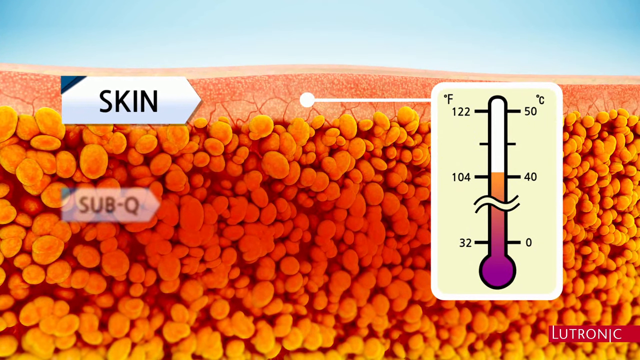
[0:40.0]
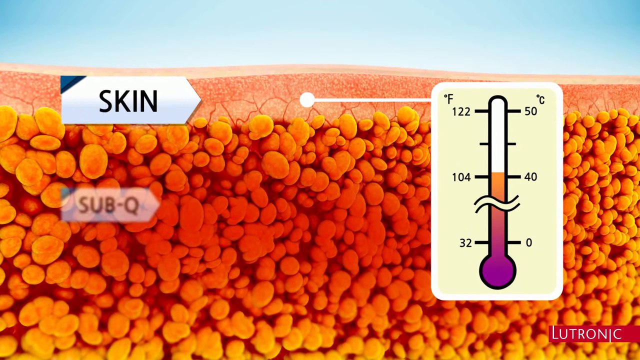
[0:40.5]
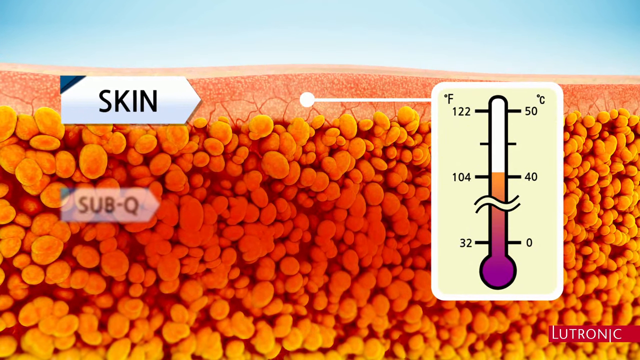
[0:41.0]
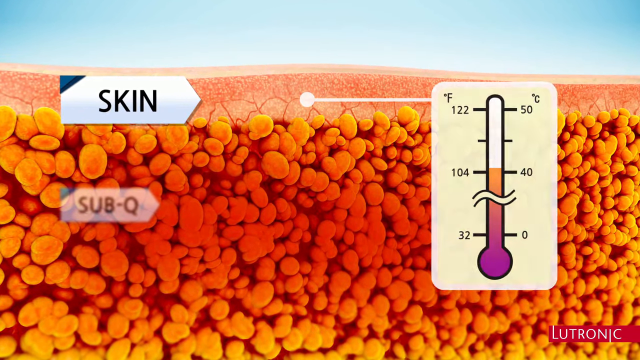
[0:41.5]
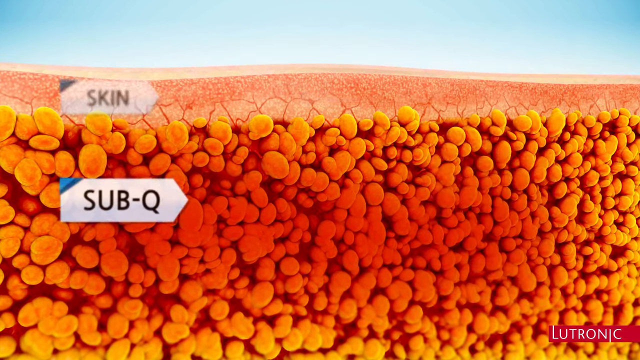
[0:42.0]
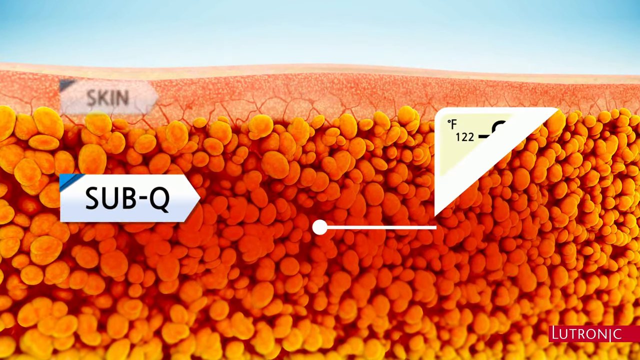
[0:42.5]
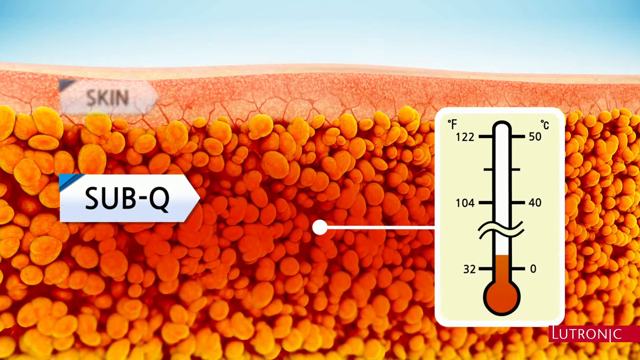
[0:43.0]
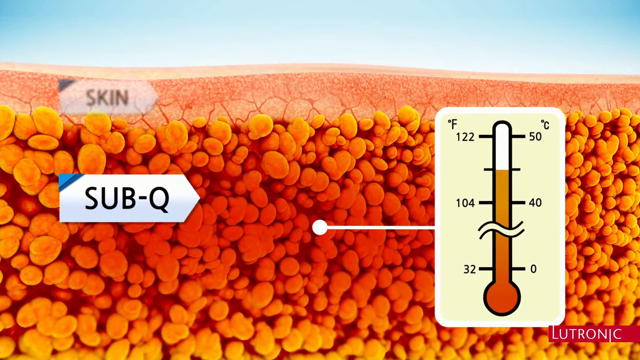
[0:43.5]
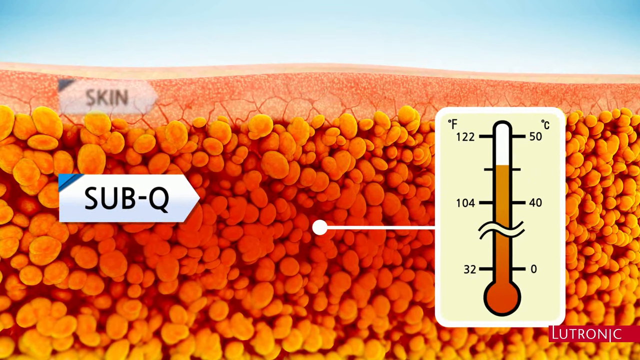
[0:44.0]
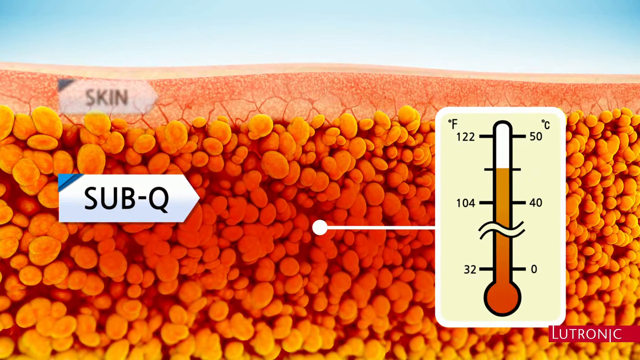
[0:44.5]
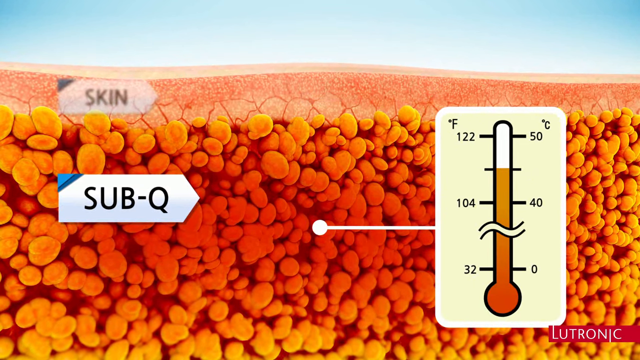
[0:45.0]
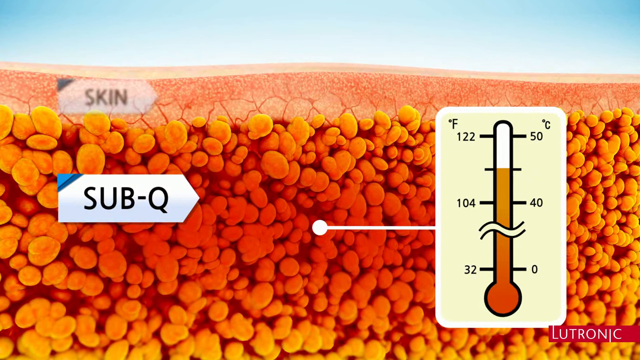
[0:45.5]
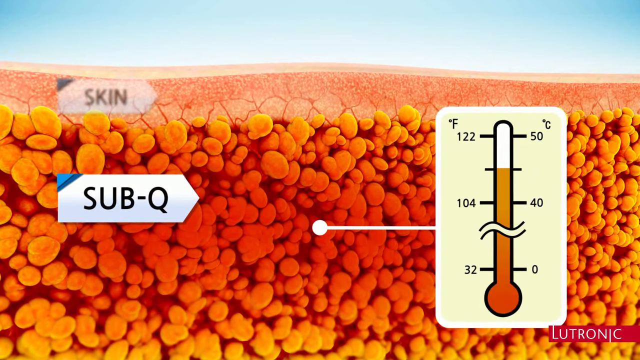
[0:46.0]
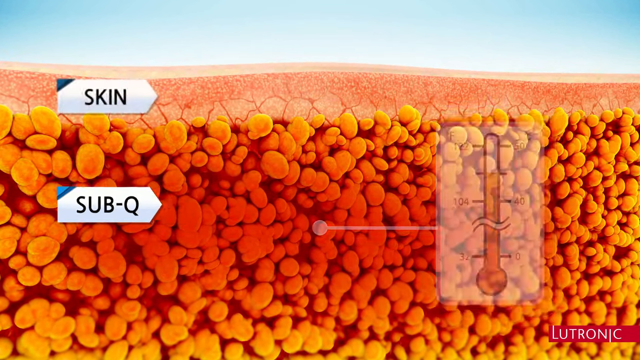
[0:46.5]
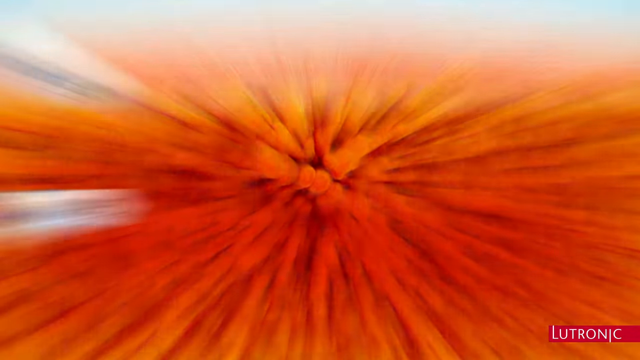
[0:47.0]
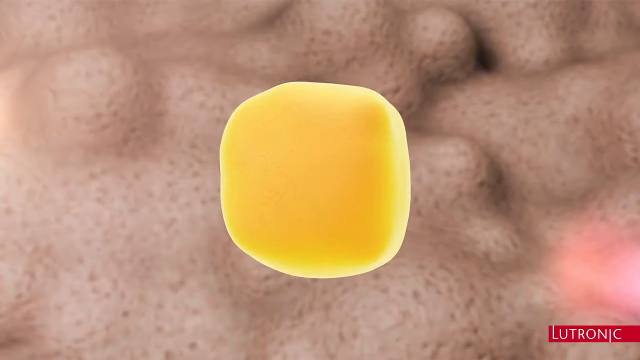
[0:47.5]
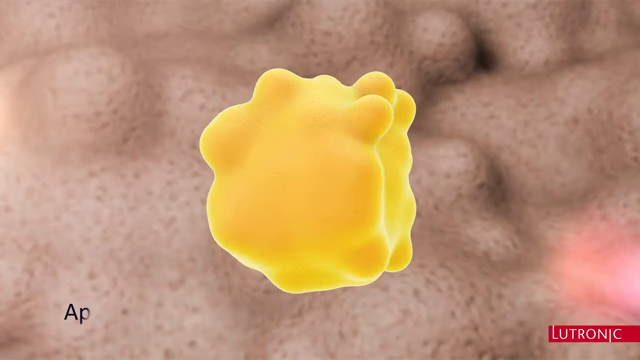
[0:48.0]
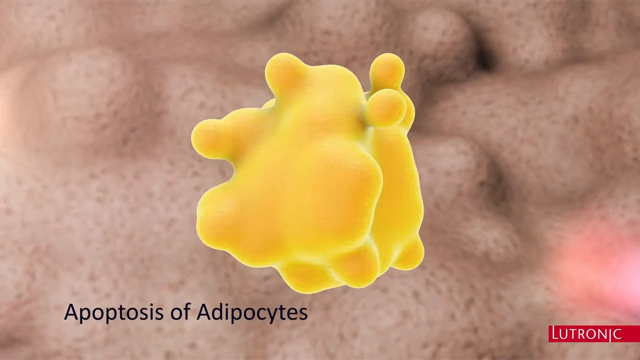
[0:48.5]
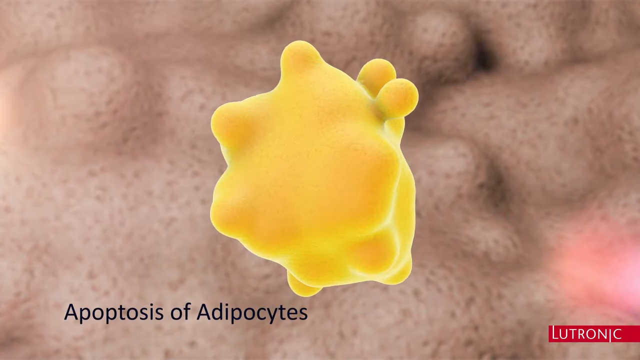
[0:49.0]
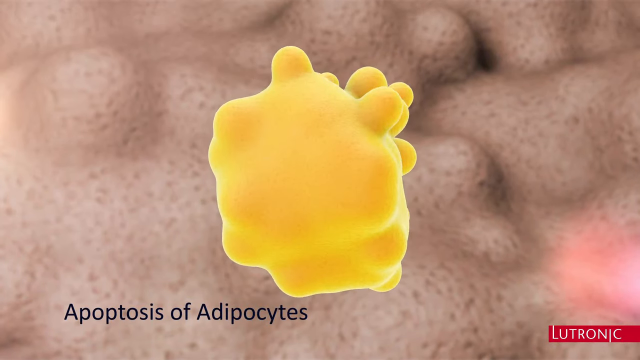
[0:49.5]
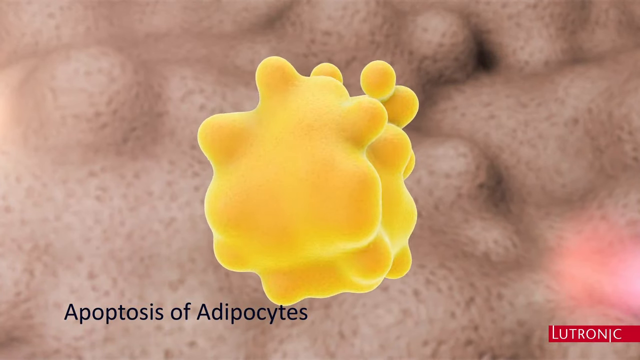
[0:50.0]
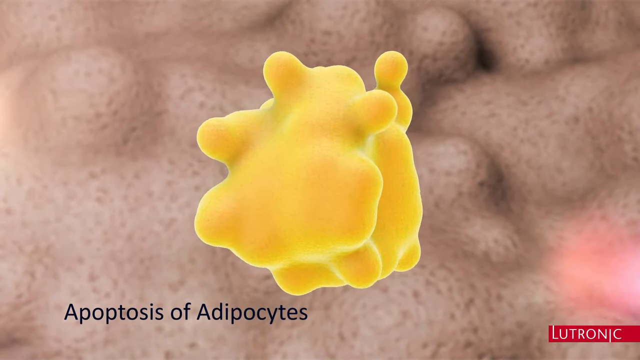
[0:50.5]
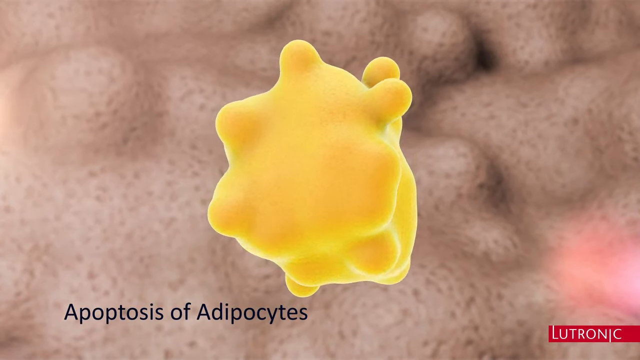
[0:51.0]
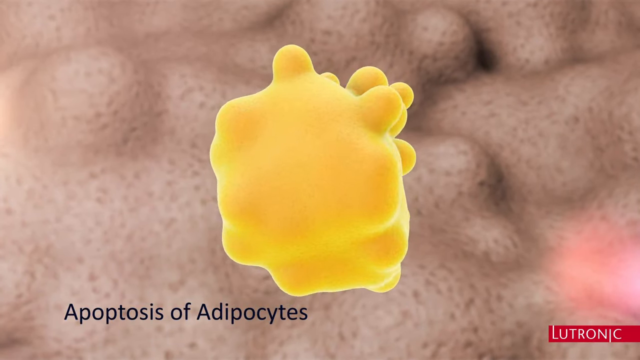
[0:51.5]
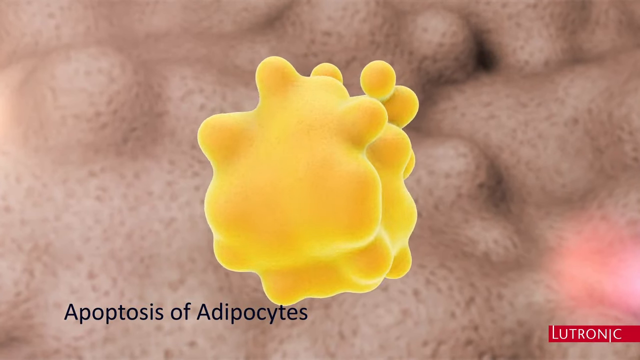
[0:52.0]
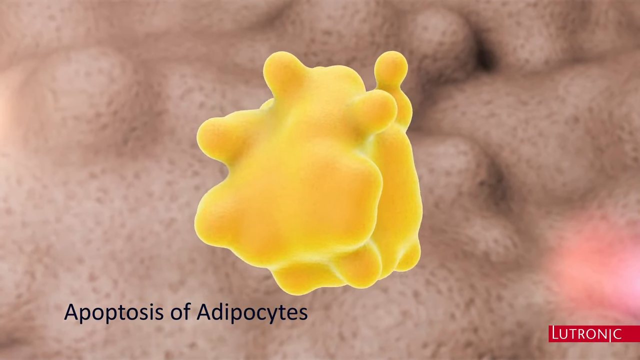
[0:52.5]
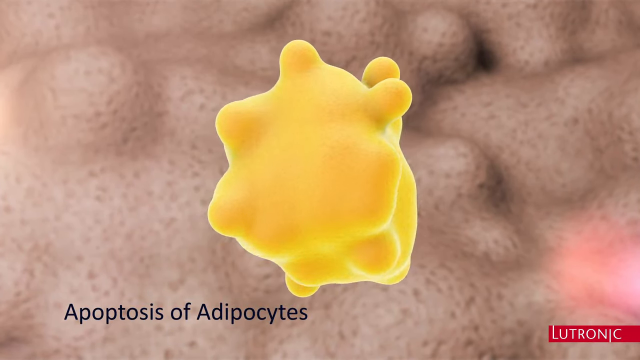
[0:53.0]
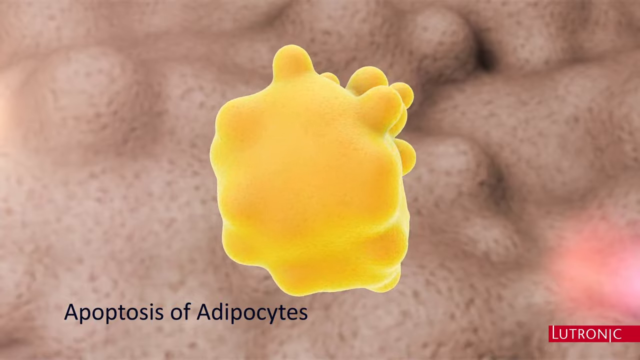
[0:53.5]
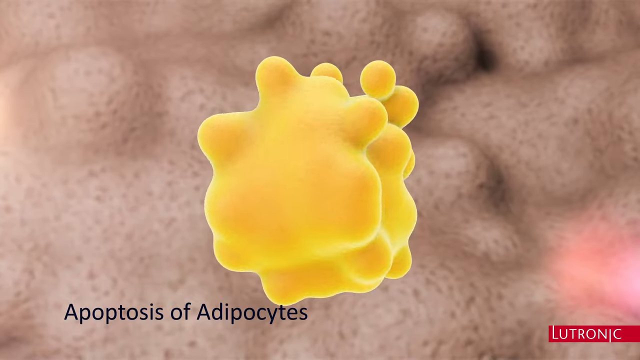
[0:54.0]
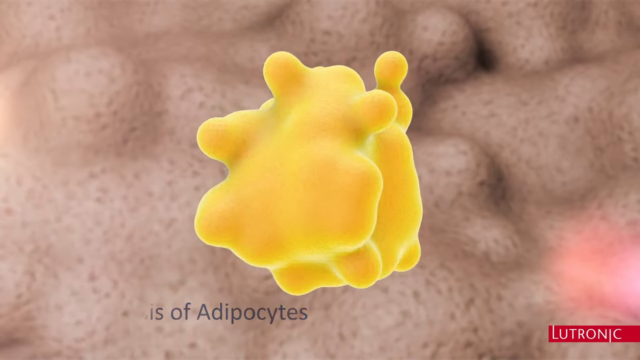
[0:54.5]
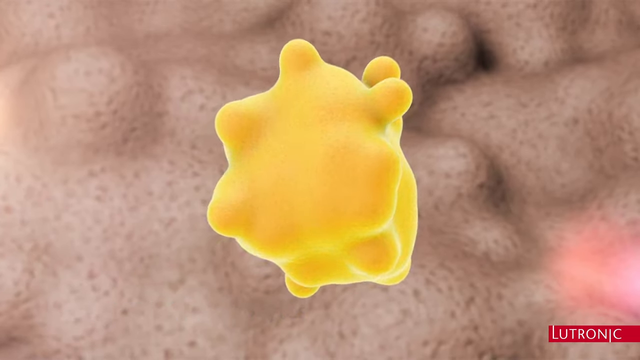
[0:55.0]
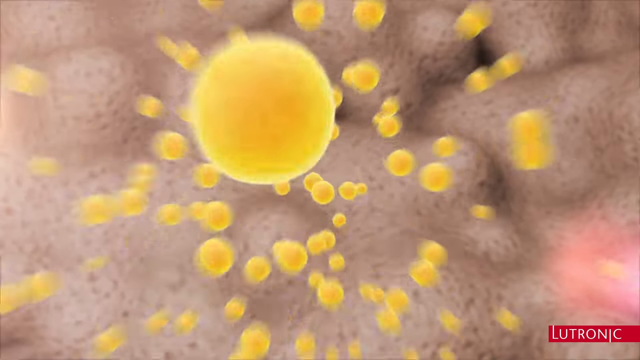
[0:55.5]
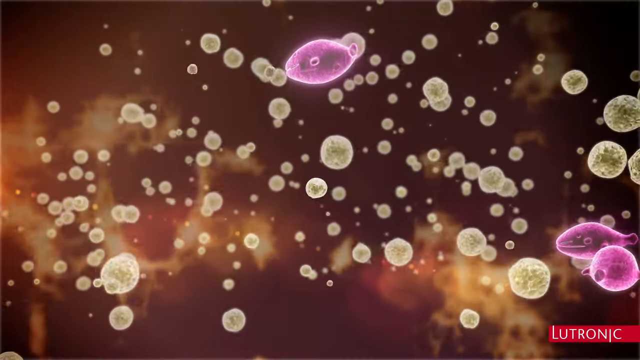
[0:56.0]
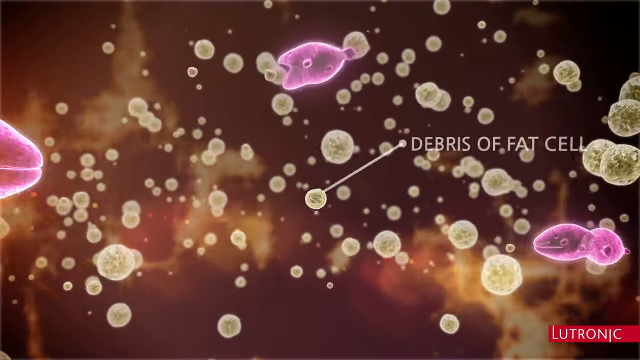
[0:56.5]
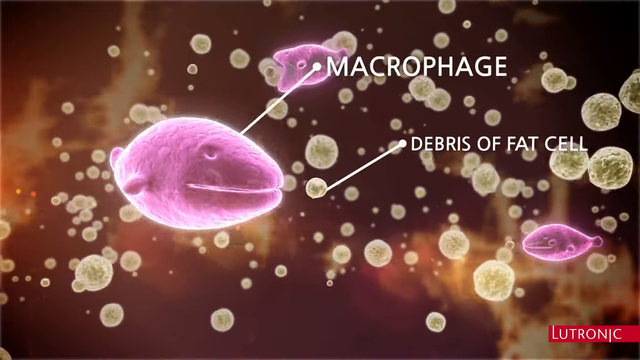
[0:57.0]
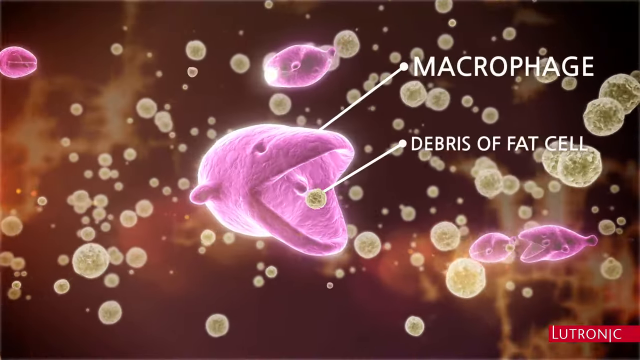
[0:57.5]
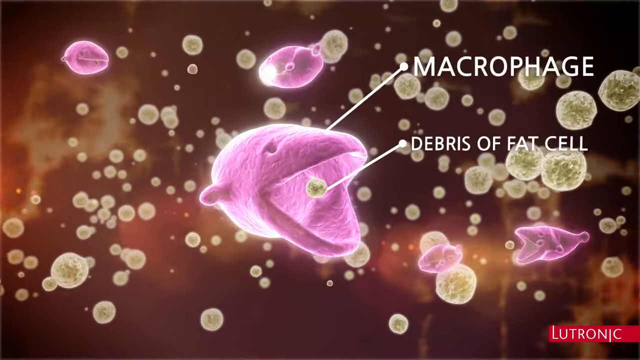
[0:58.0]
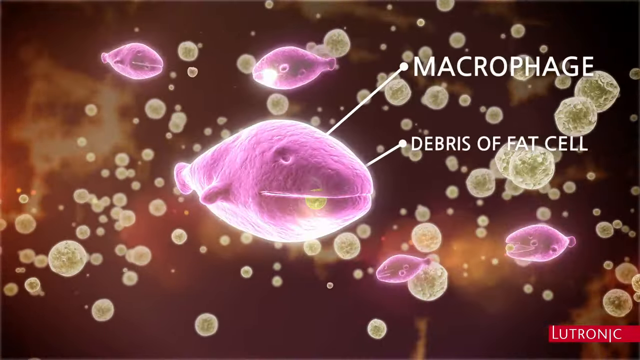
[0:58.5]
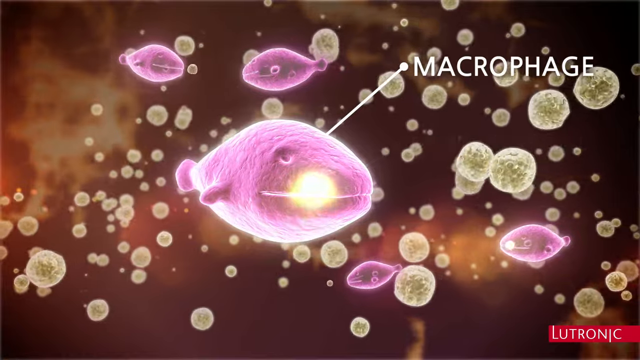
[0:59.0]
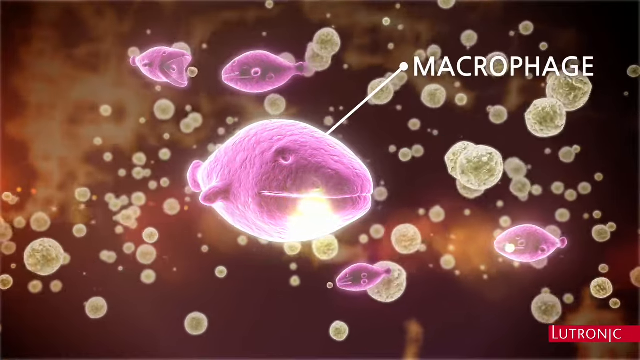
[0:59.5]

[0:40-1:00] The same diagram of the skin and the sub-Q fat cells is shown once again, focusing on the temperature of 104 degrees Fahrenheit. Next, a big blob of fat is shown, and a slide says something about apoptosis of the fat cells. The following slide identifies macrophages.